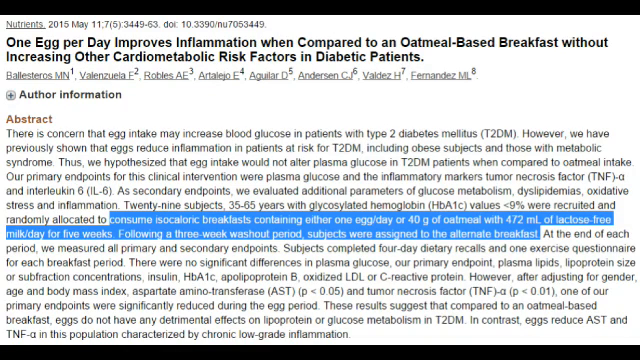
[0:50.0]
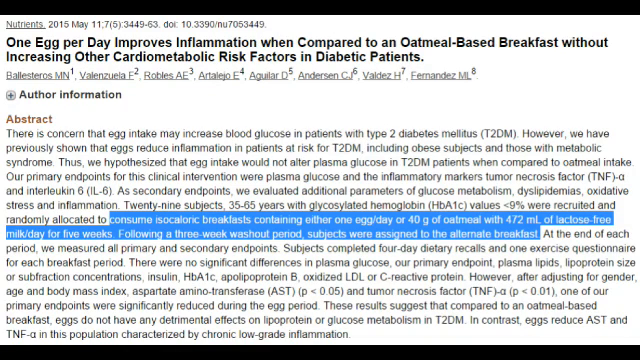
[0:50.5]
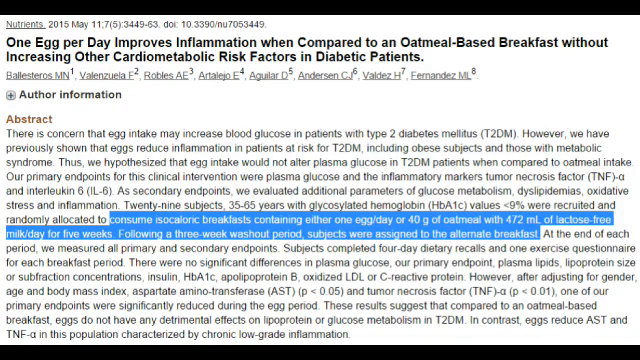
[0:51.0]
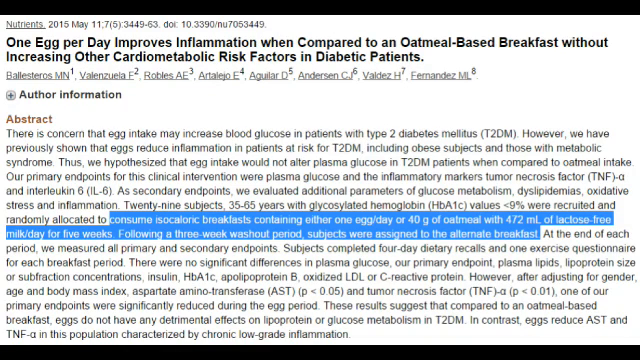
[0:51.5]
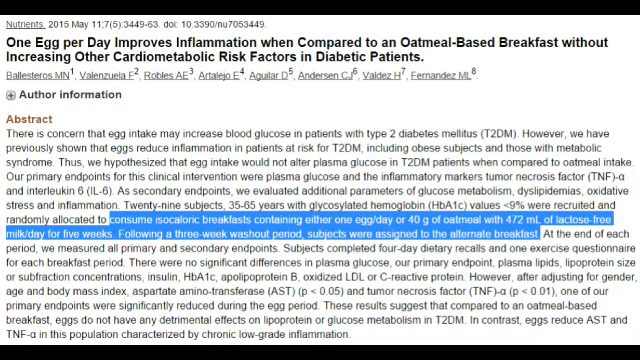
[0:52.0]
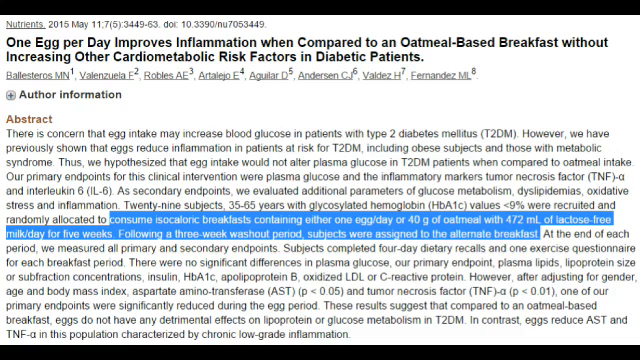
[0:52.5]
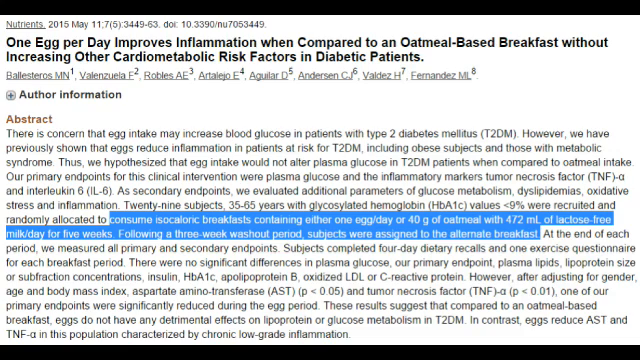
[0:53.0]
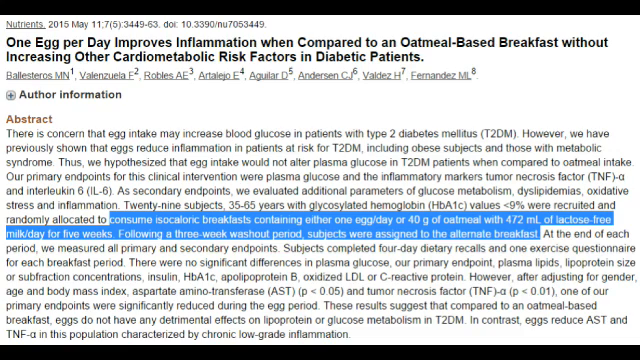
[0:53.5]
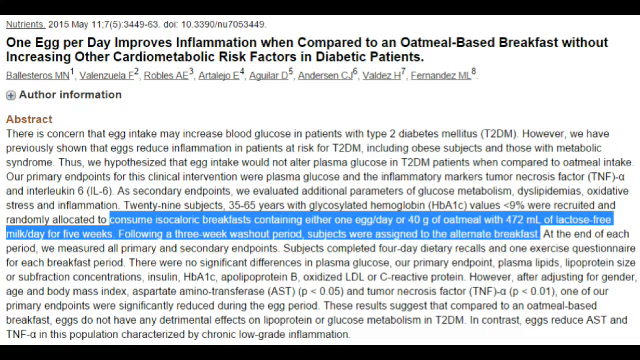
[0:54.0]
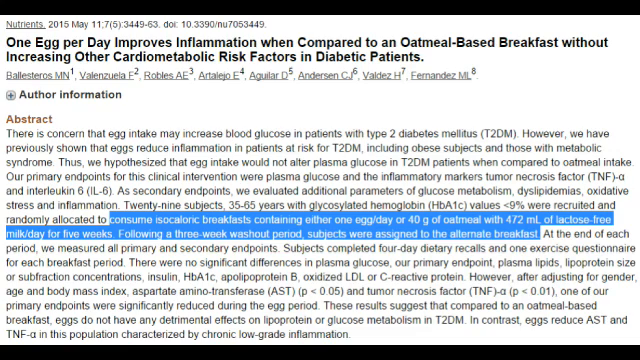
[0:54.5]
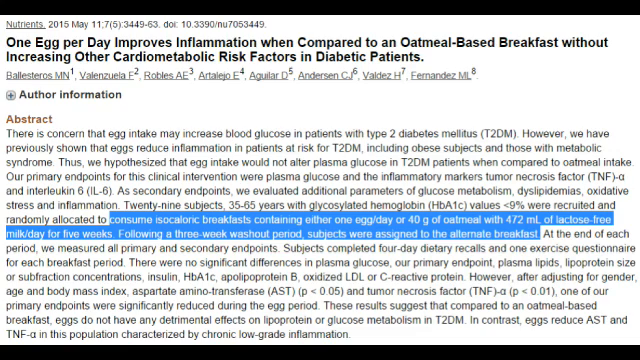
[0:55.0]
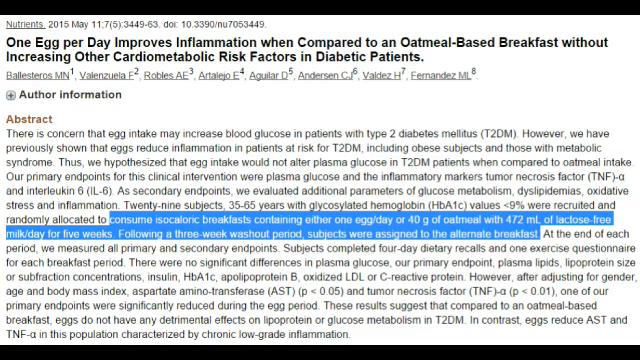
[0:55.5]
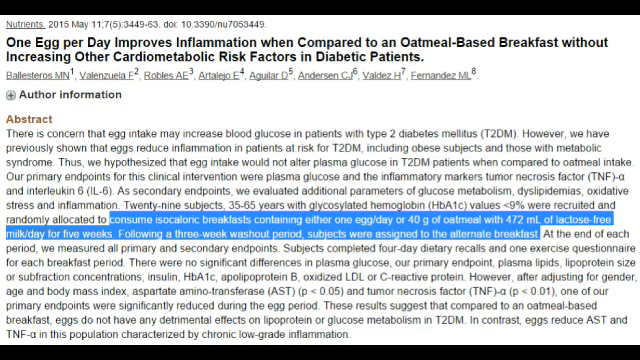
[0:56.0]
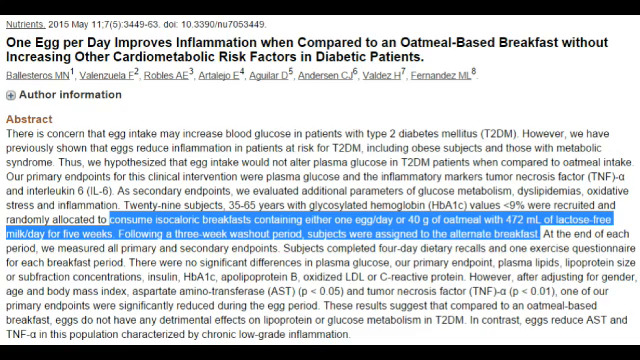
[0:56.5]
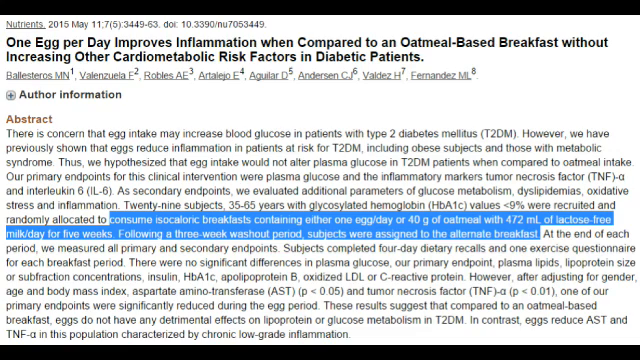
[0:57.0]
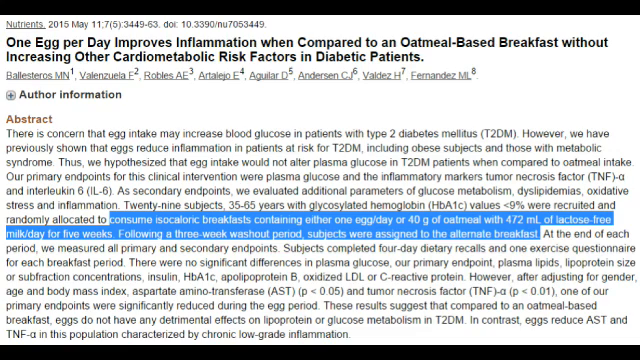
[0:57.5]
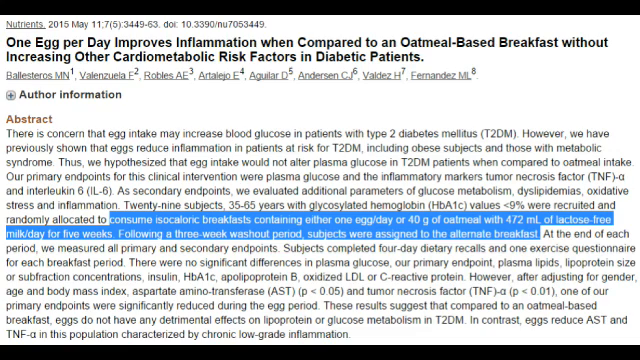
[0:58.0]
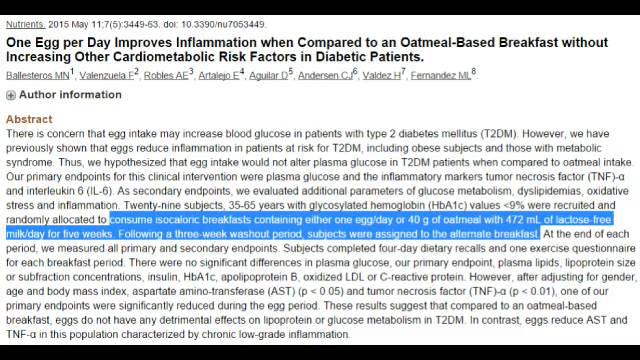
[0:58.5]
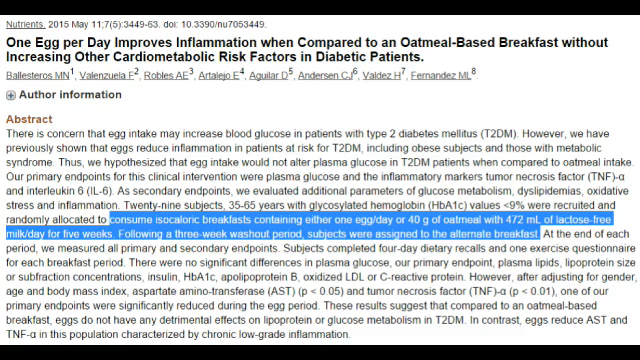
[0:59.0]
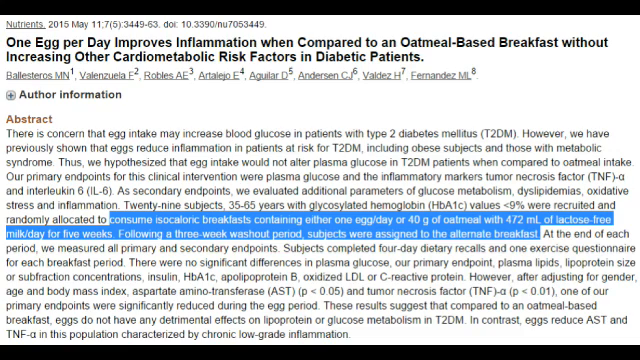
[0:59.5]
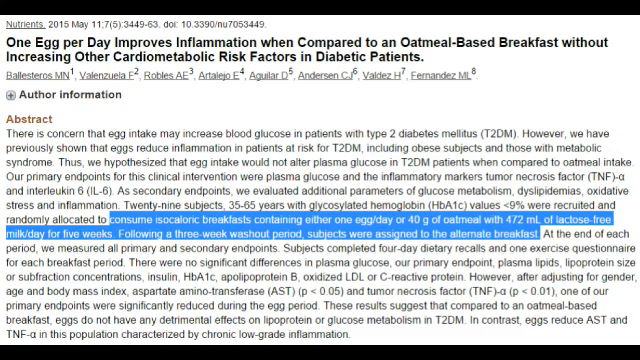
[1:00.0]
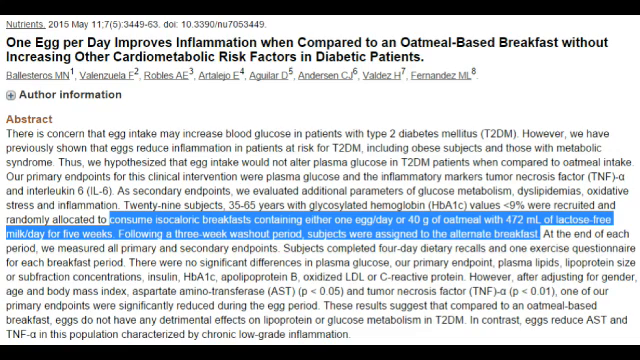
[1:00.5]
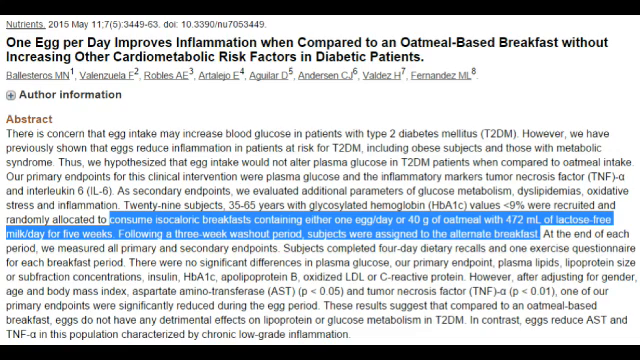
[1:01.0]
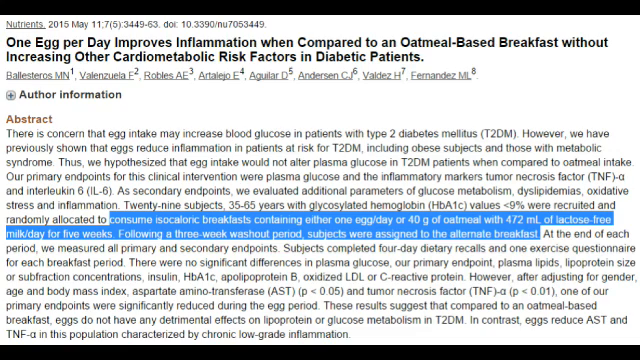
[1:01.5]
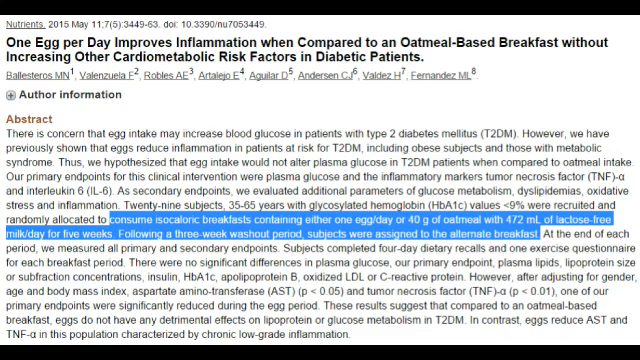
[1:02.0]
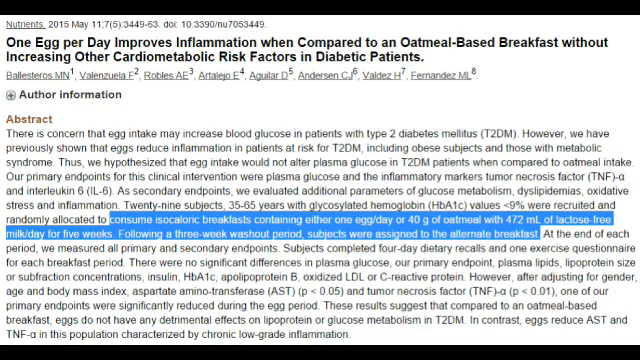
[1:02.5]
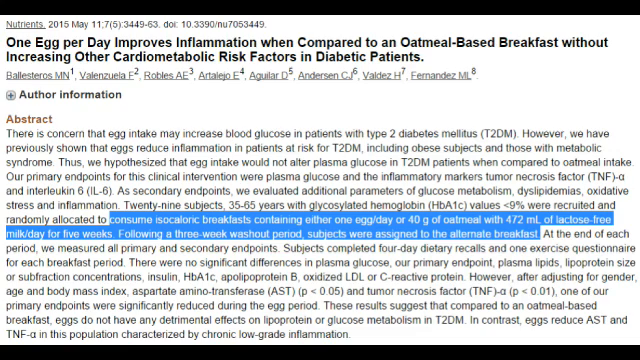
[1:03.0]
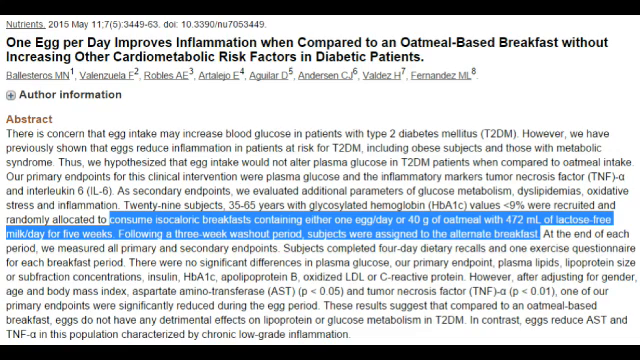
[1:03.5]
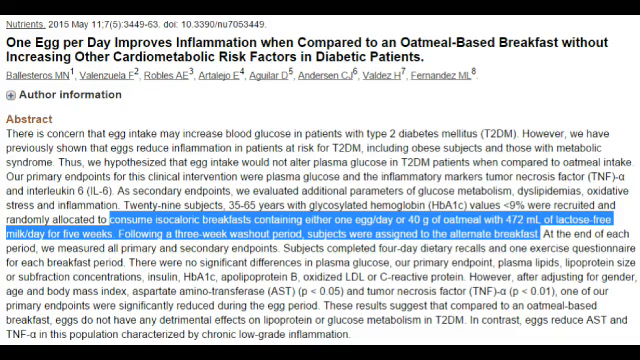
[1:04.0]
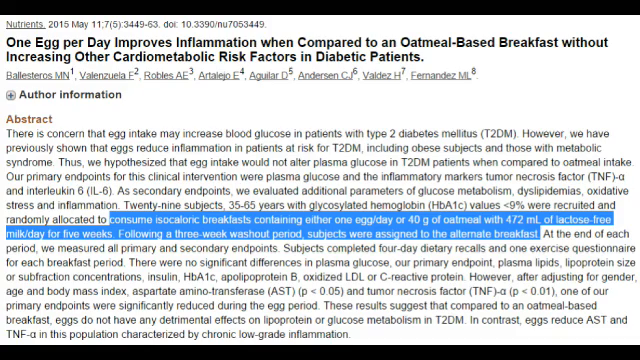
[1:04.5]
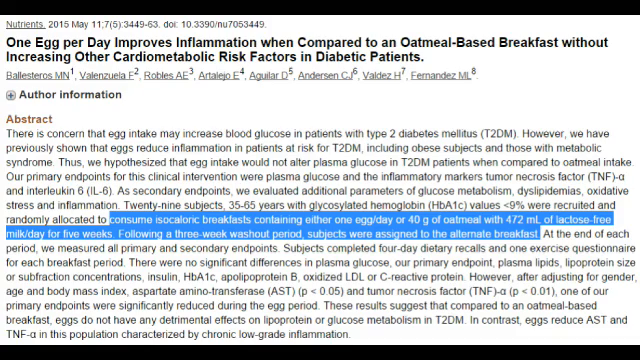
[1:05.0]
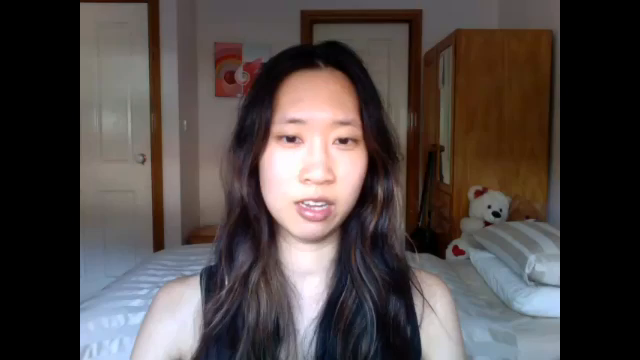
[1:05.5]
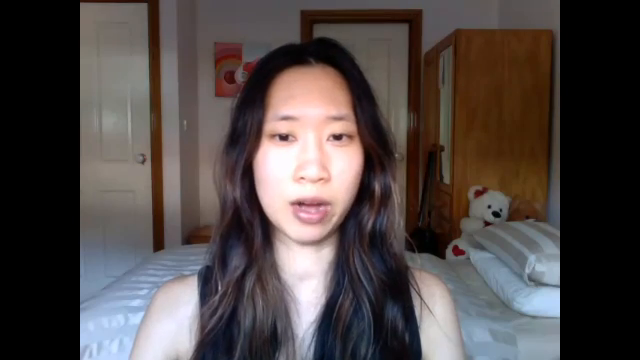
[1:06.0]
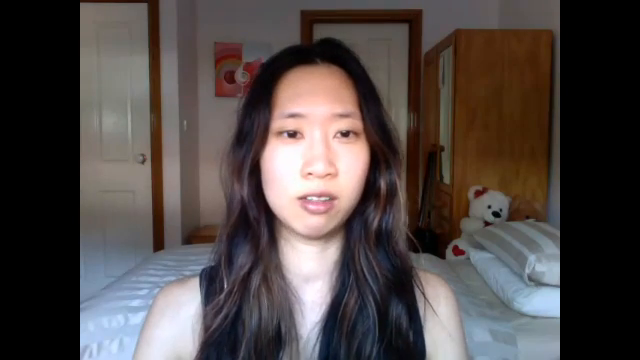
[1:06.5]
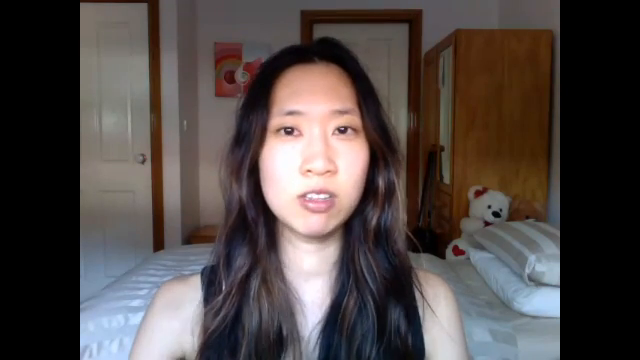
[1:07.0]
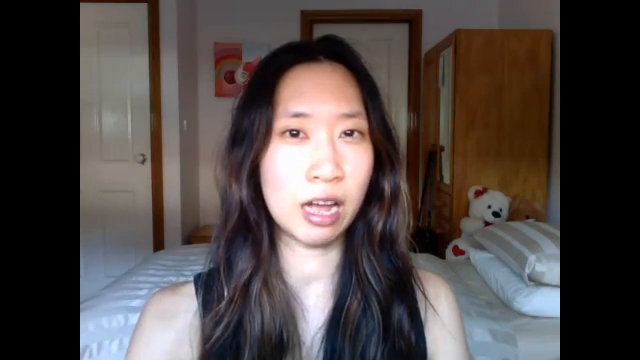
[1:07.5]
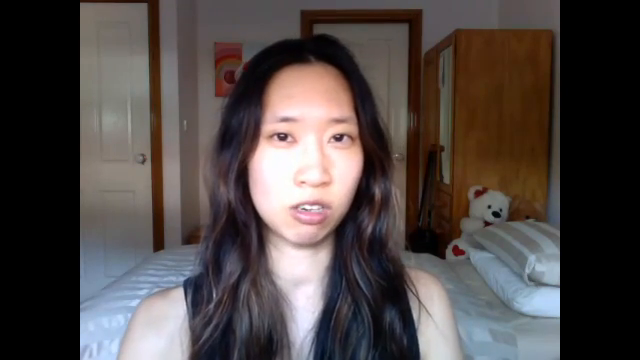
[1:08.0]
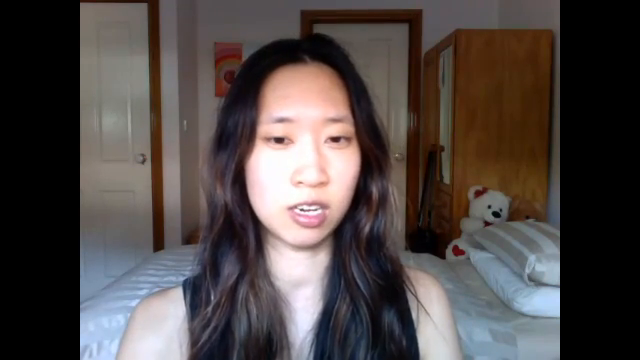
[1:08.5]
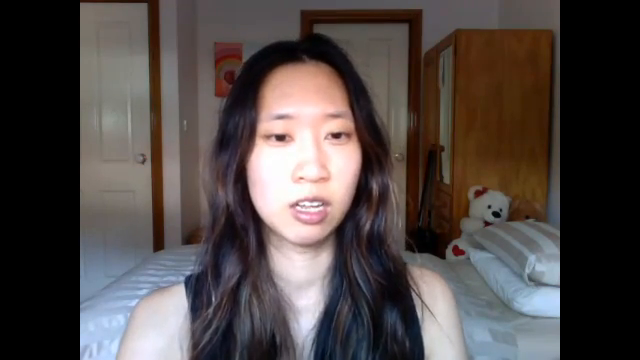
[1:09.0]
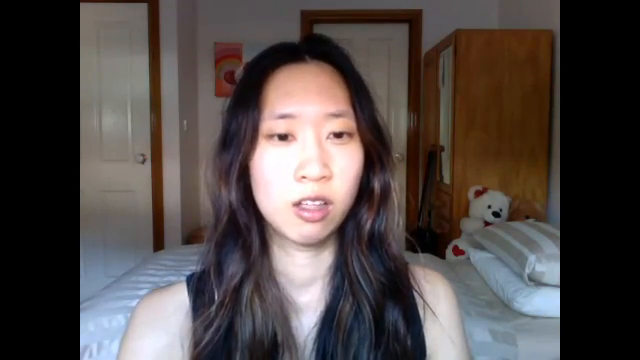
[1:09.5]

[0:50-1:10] The highlighted part of the abstract is shown, and then the video returns to the woman in her bedroom; nothing new appears in the bedroom. The article looks to be published in a scientific magazine titled Nutrients, on the 11th of May 2015.